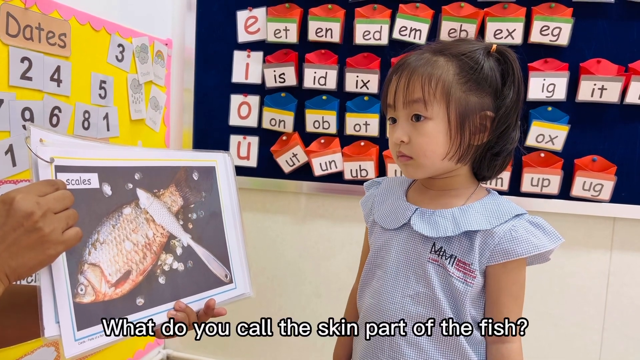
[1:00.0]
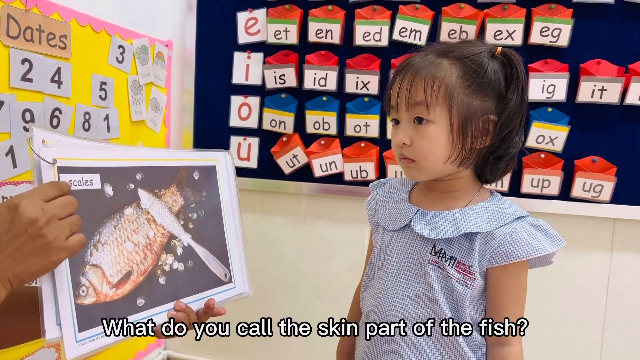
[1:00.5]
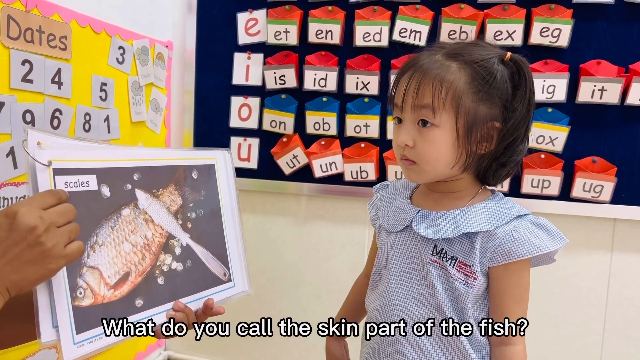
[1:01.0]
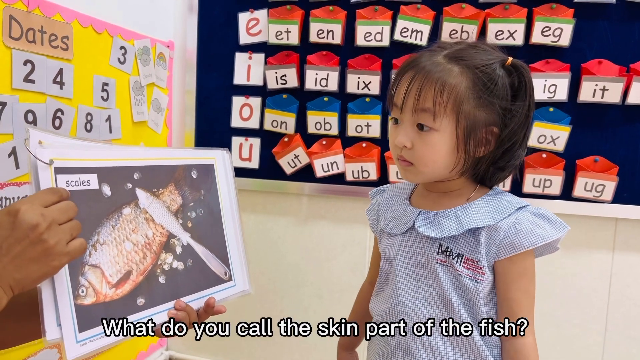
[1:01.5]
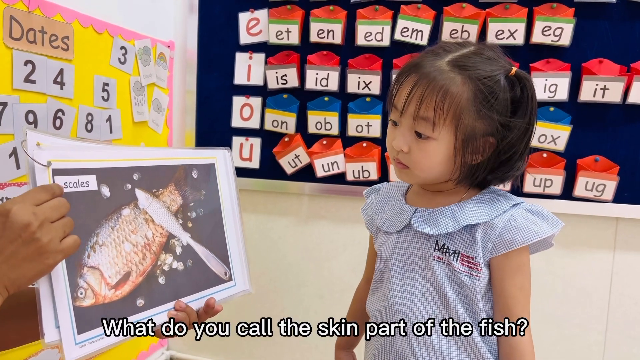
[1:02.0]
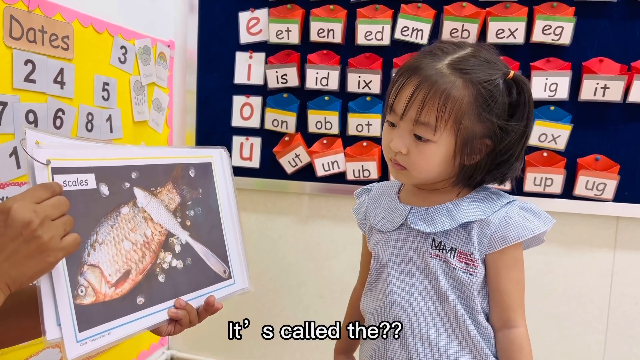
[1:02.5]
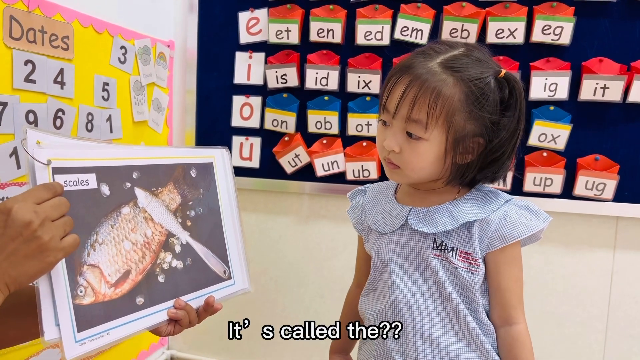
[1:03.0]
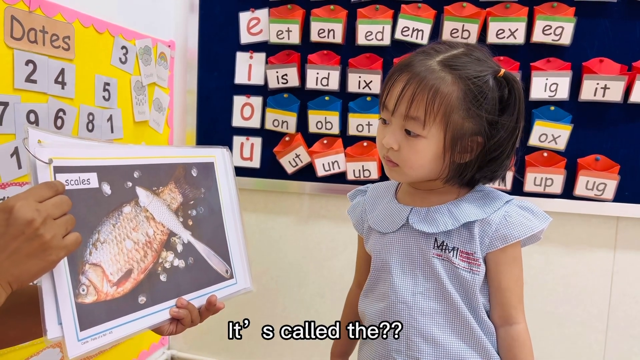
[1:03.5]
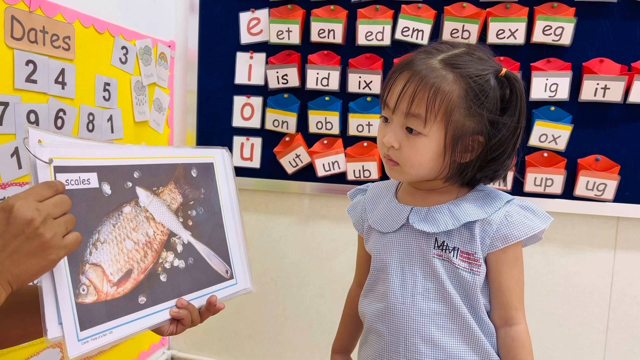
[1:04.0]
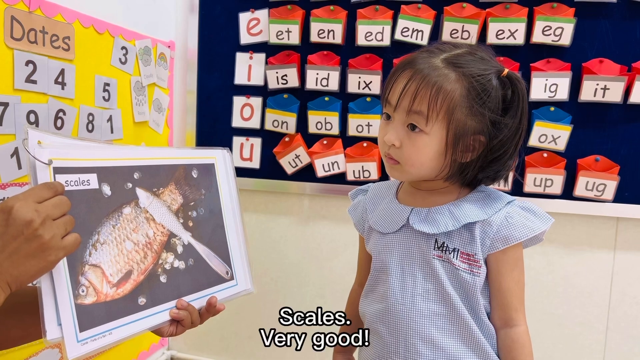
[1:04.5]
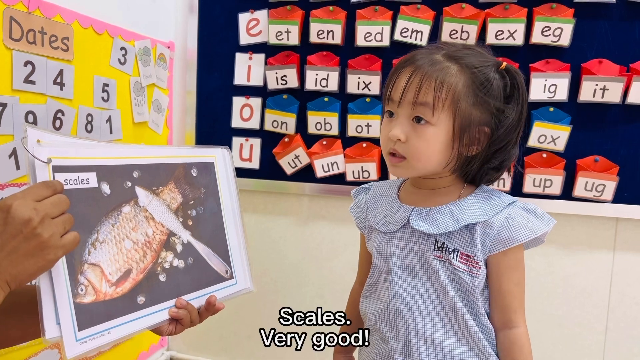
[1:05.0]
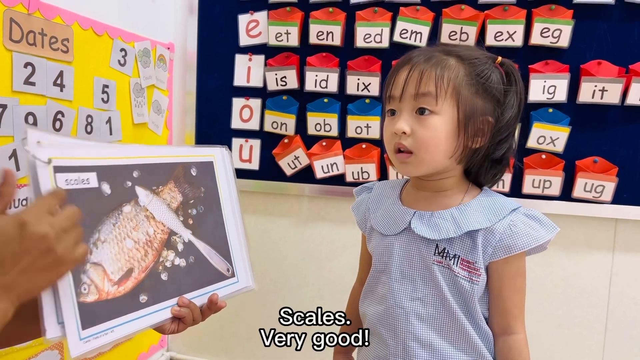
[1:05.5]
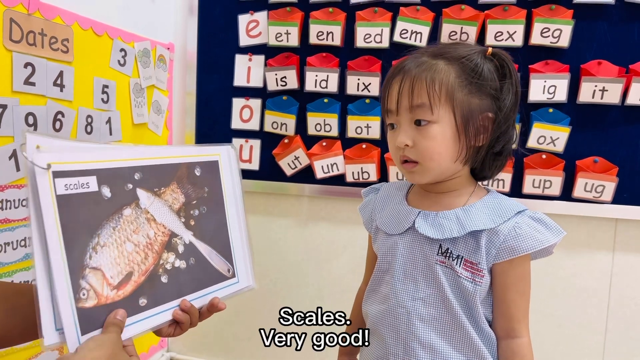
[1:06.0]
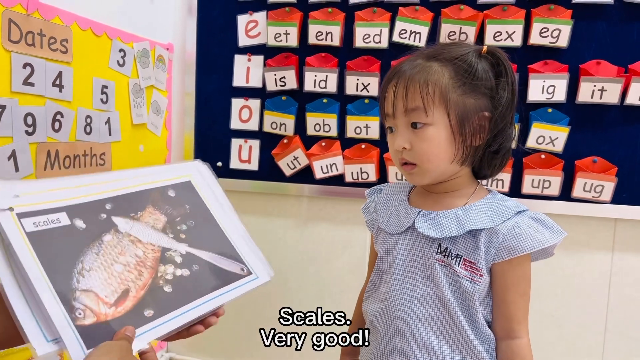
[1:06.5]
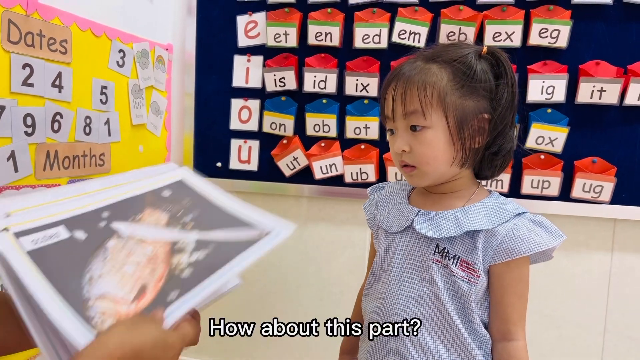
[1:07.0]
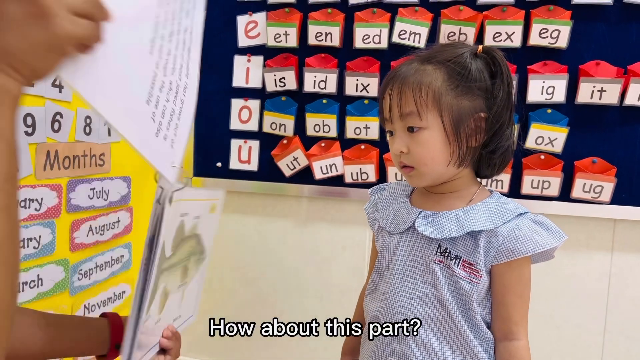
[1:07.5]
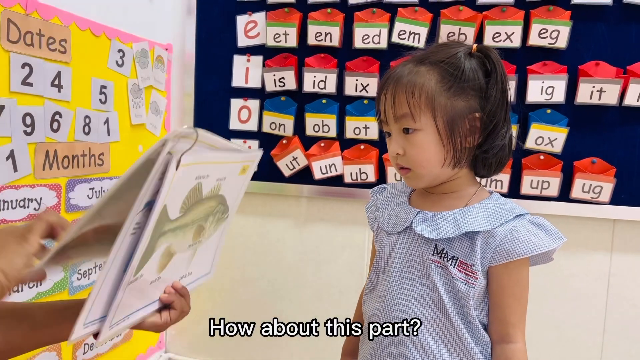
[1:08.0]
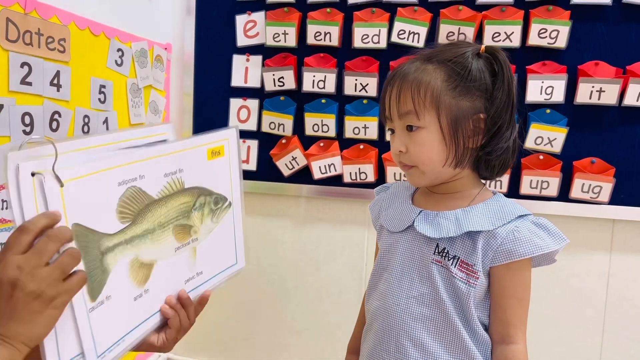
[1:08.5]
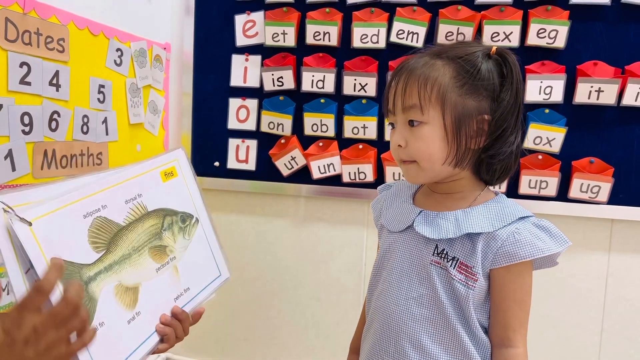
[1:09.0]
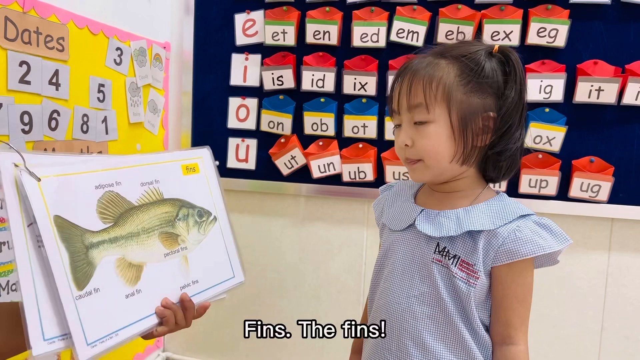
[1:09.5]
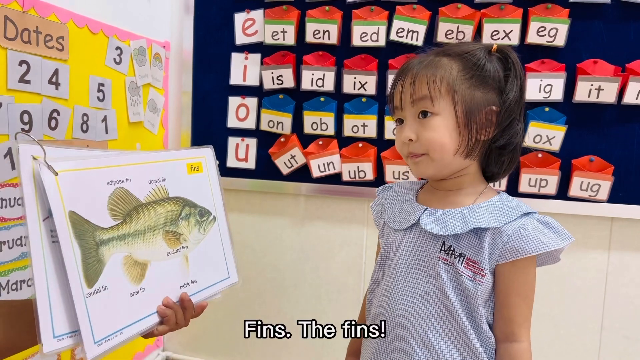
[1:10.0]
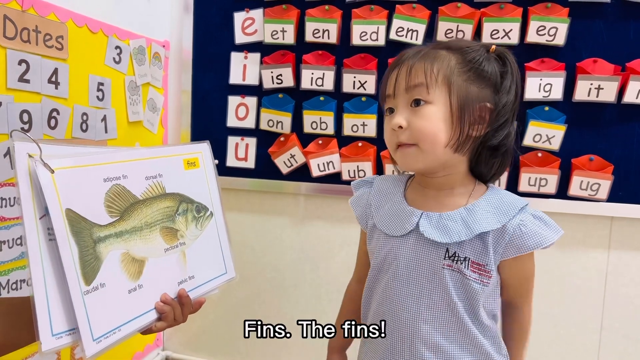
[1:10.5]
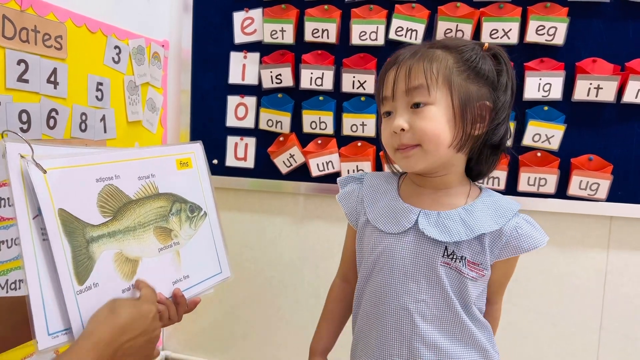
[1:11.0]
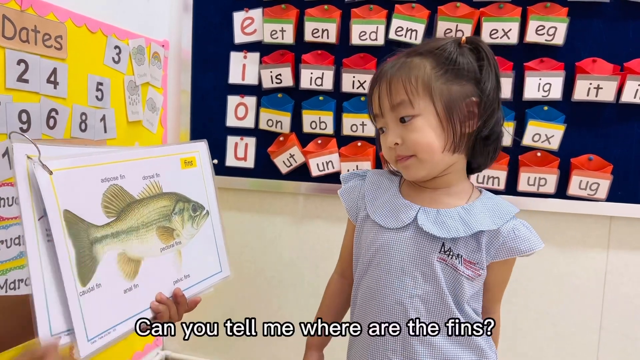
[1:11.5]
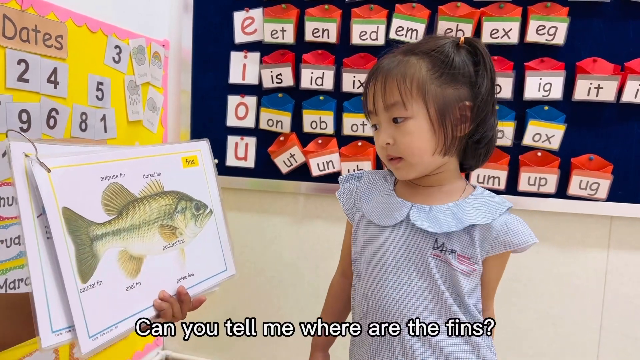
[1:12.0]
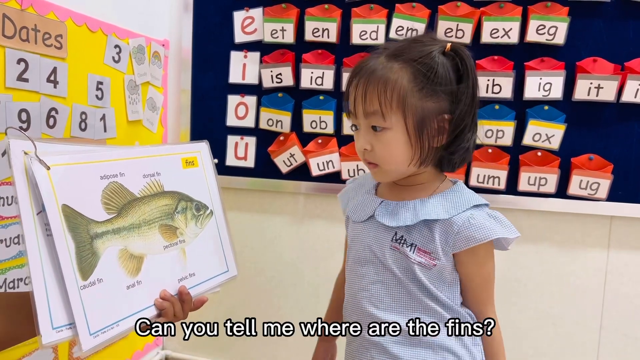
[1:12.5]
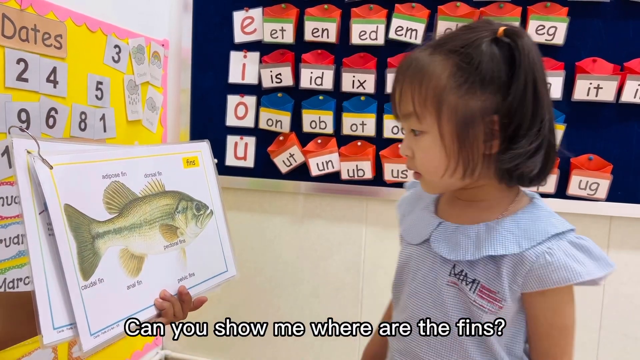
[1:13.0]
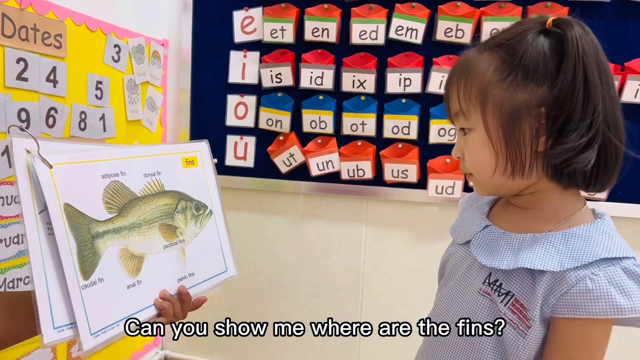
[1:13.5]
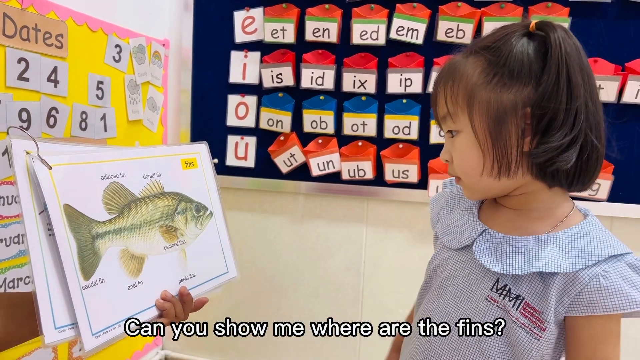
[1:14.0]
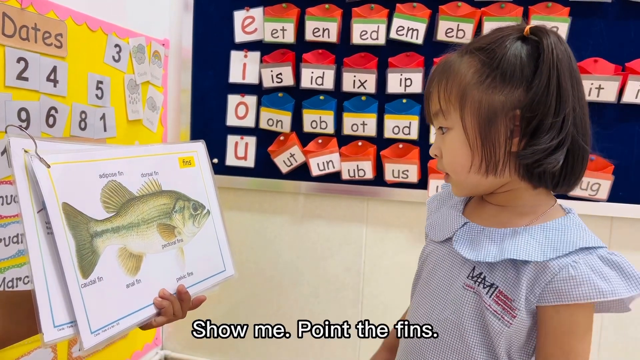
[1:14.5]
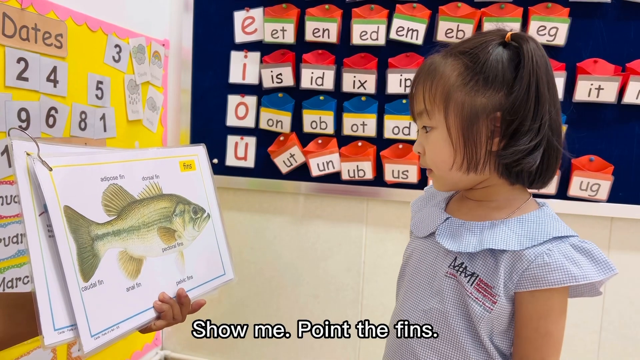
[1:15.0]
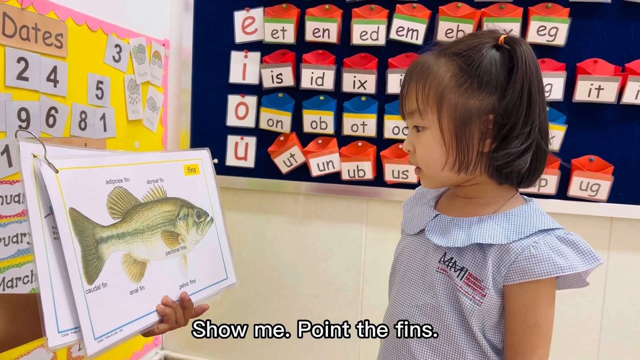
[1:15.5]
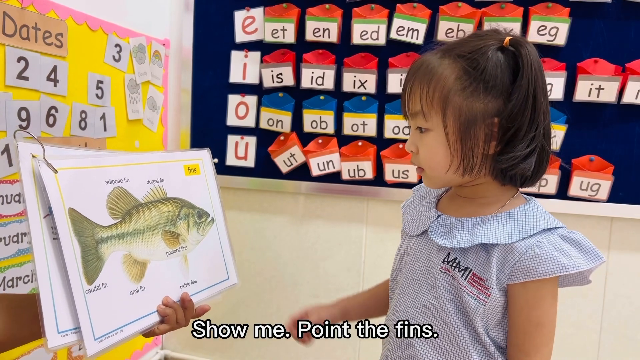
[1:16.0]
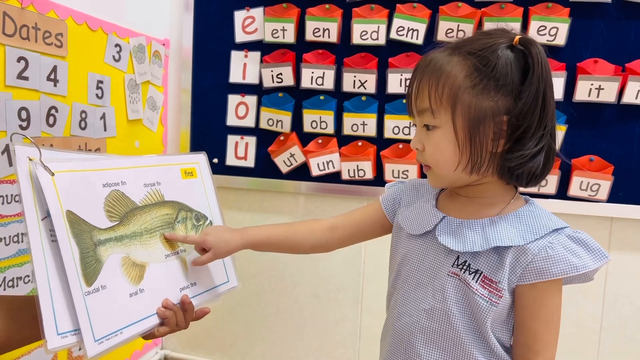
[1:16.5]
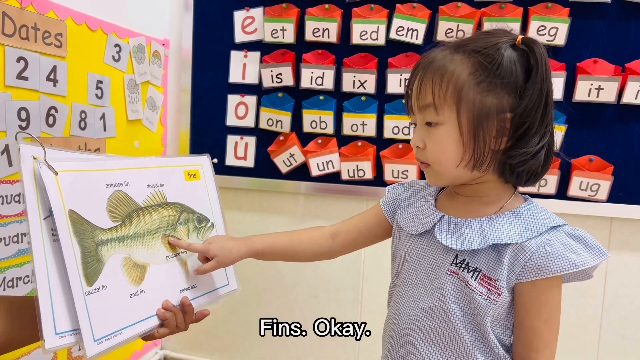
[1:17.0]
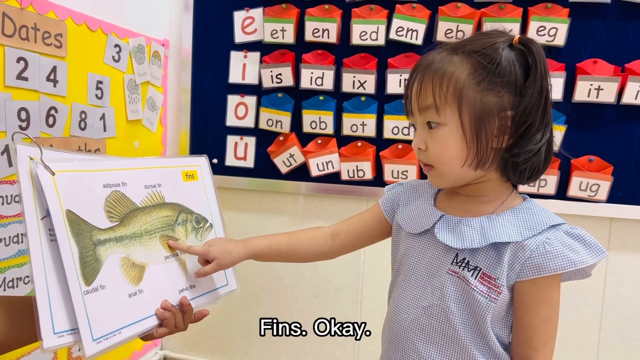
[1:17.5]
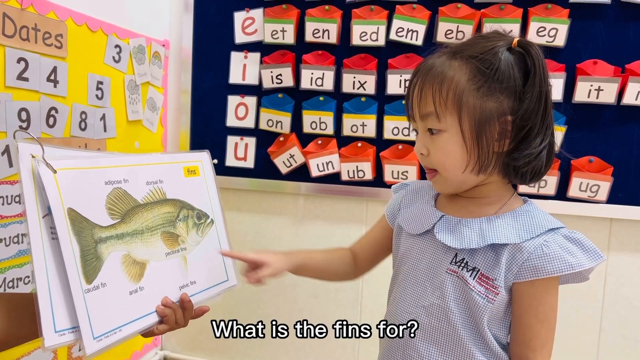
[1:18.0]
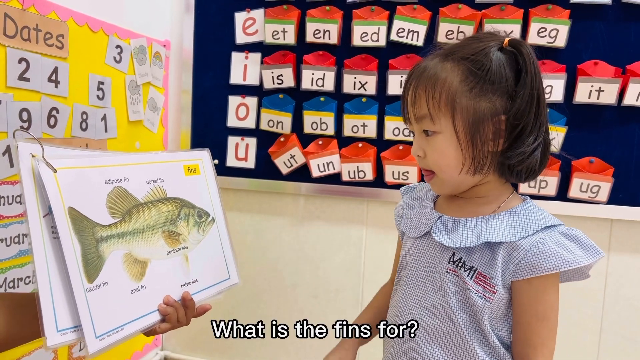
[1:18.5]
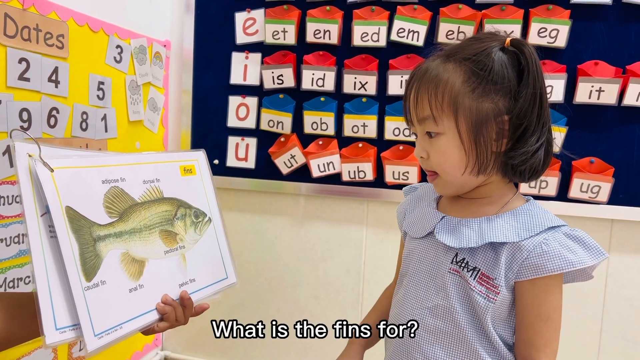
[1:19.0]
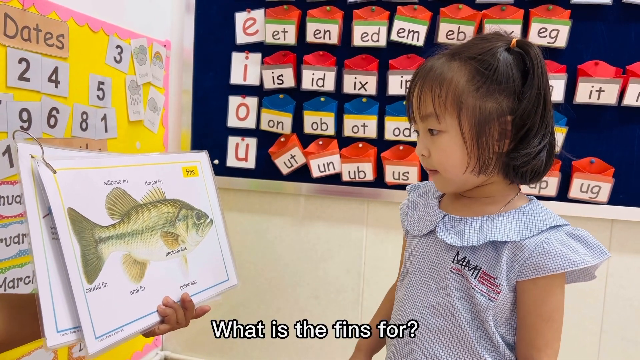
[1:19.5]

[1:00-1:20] Fifi talks about scales. At first she doesn't seem to know what the teacher is asking, but the teacher points to the word scales, and Fifi seems almost to read the letters to work out the question. Once she gets scales correct, the teacher flips the page and asks where the fins are. Fifi points mostly to the bottom fin, although there are other possible fins on the page. At the same time she adjusts her underwear.